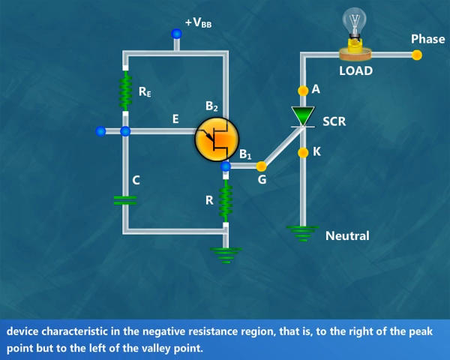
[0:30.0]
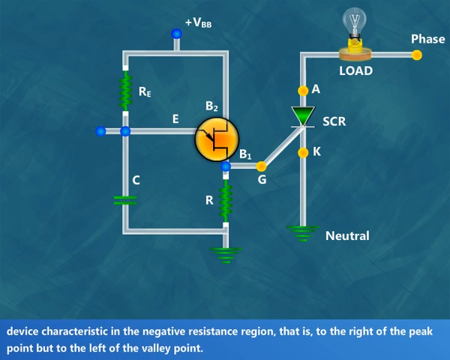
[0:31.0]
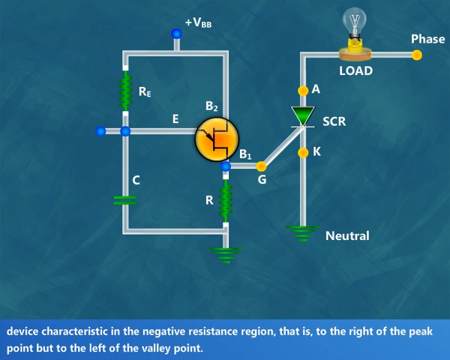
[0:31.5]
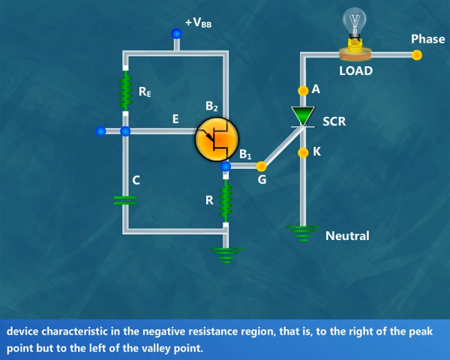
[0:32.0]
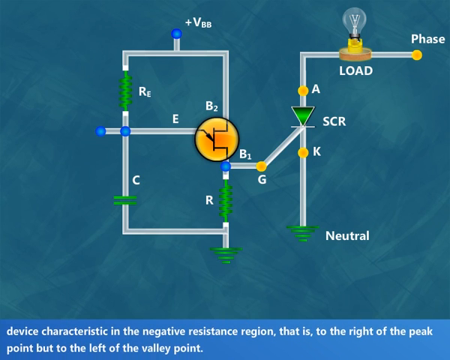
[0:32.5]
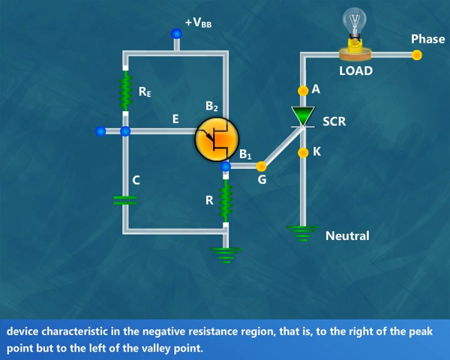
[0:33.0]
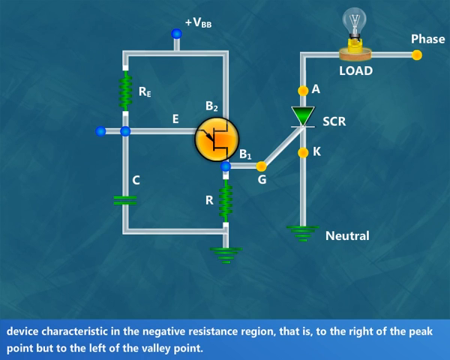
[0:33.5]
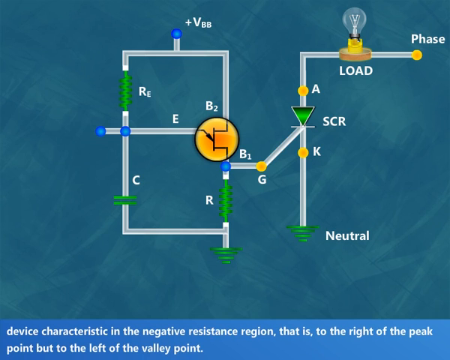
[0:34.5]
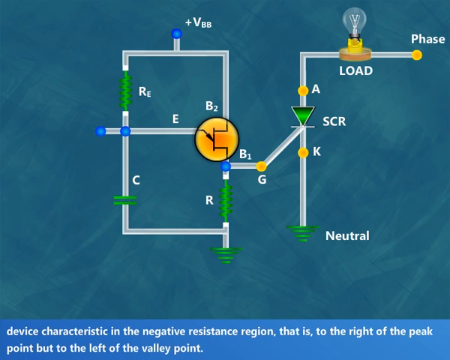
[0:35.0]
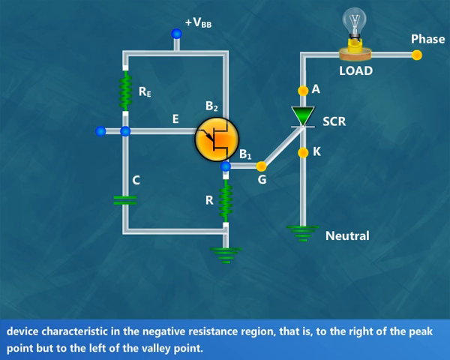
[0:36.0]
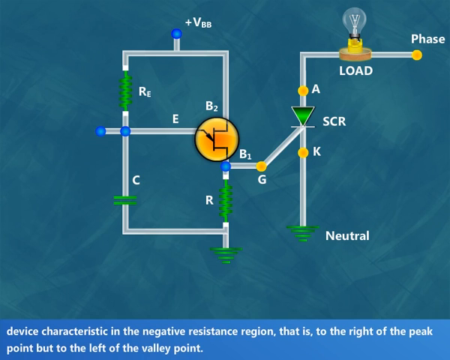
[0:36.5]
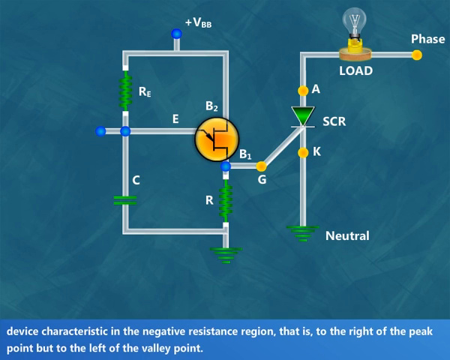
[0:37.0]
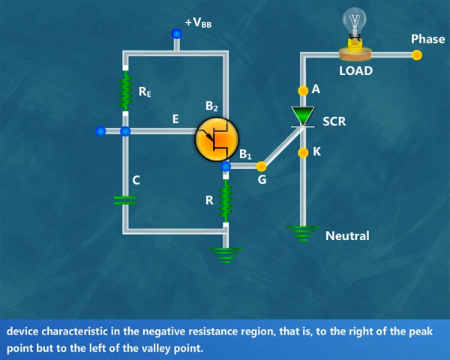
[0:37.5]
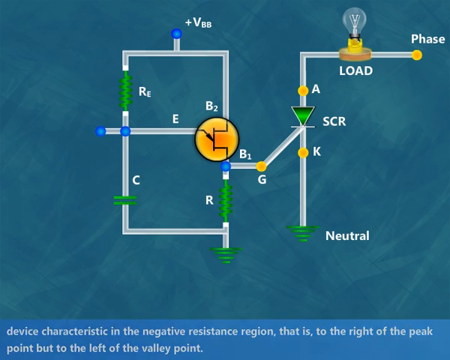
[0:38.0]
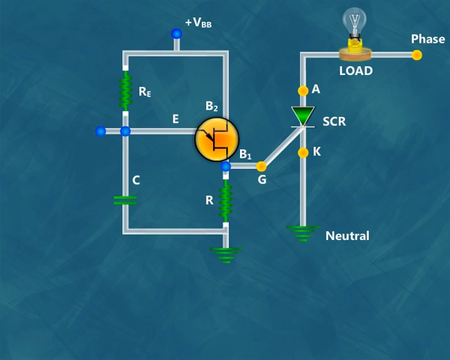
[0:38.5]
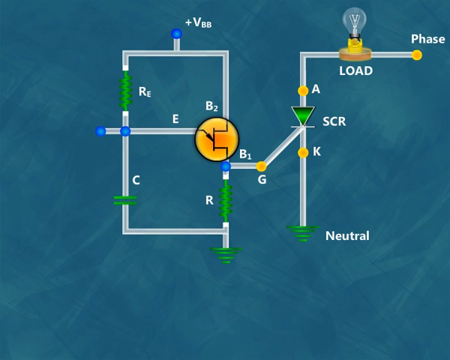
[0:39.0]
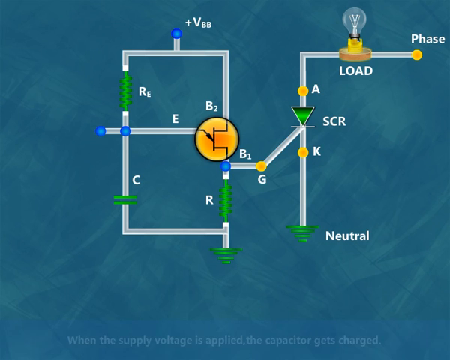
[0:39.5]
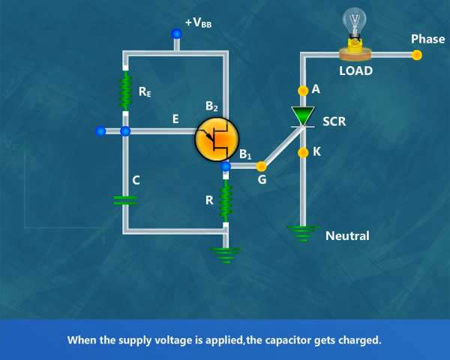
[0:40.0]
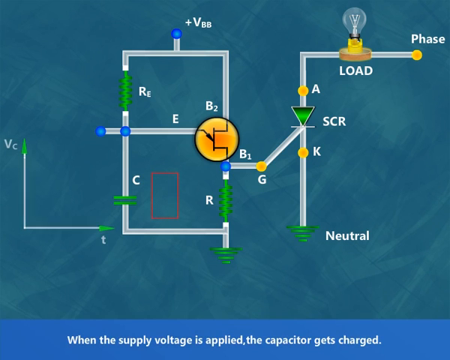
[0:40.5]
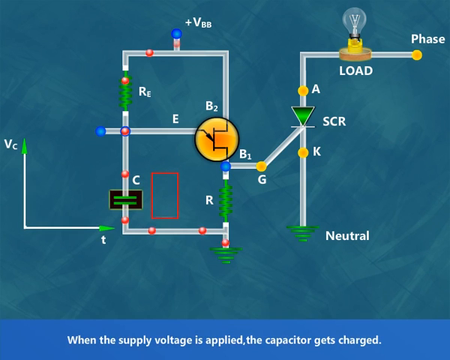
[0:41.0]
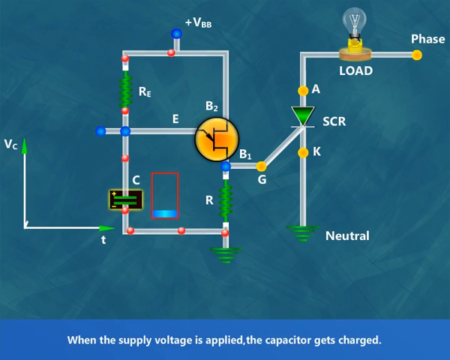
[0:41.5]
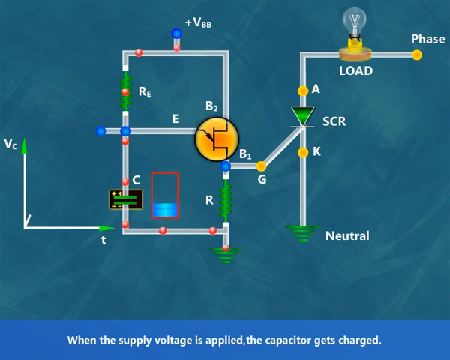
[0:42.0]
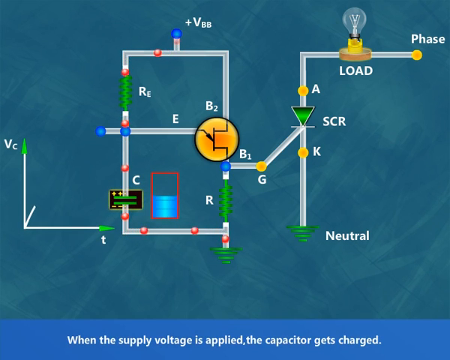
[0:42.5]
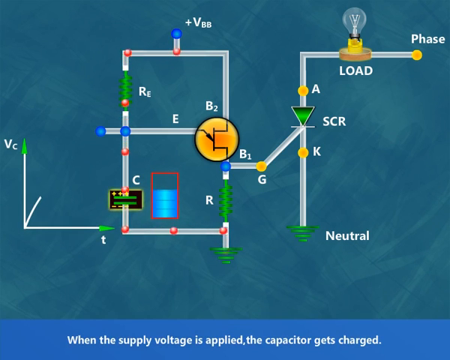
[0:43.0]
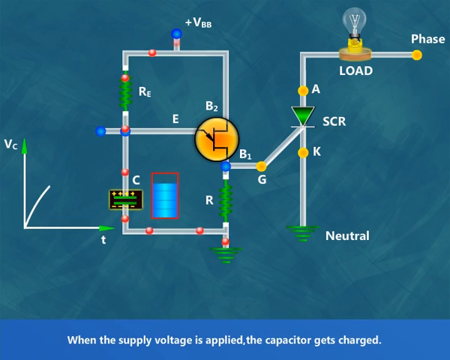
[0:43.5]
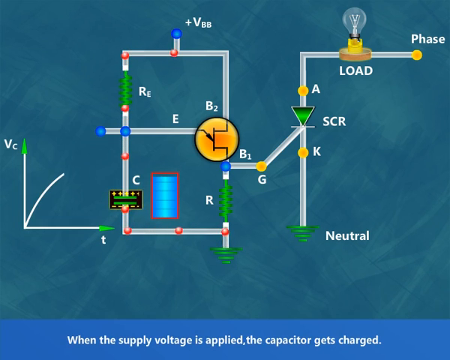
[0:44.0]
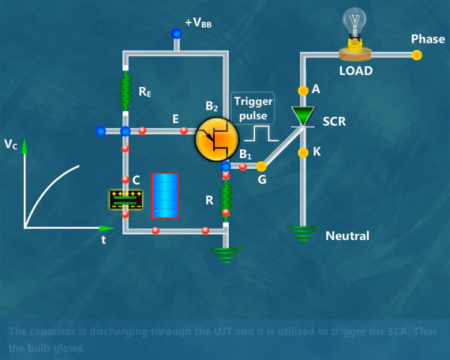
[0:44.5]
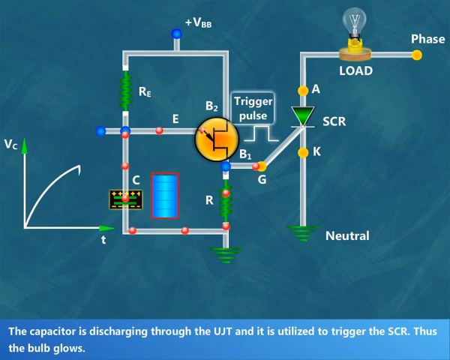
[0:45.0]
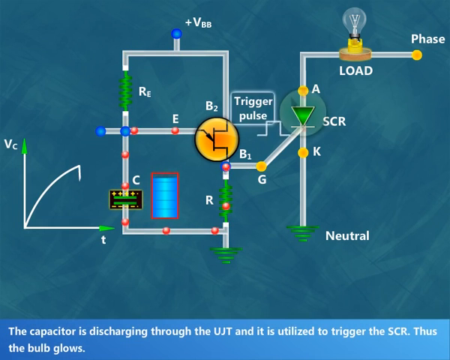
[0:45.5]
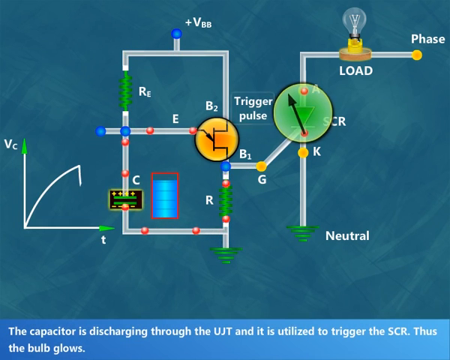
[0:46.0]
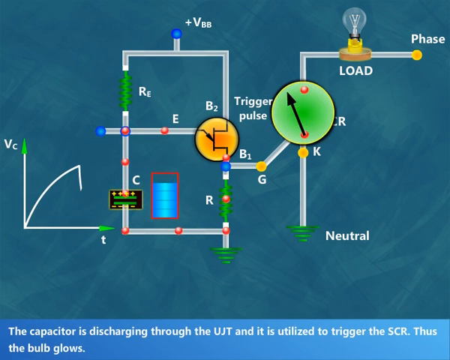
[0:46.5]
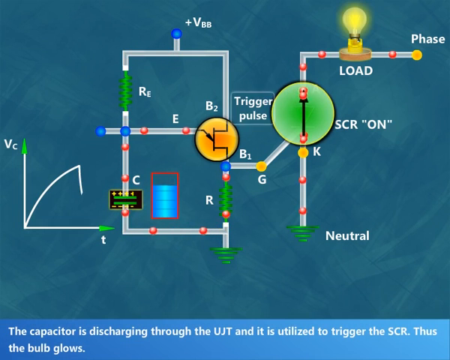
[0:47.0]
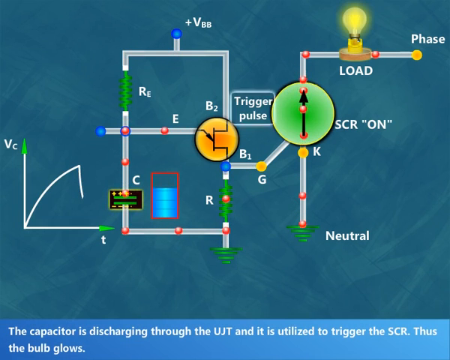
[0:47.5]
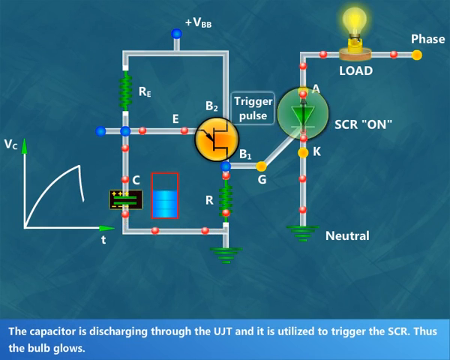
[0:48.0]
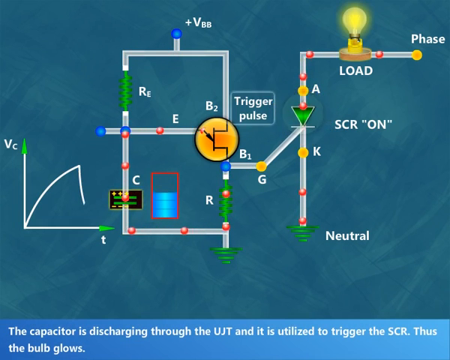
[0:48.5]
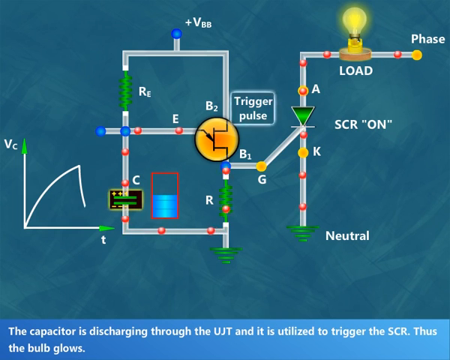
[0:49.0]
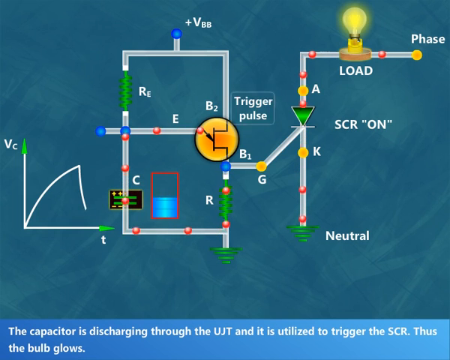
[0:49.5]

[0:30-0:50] The circuit includes a capacitor, a supply voltage as the input, and the light bulb as the load.